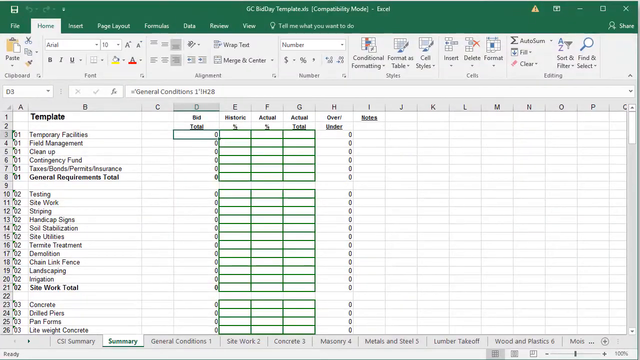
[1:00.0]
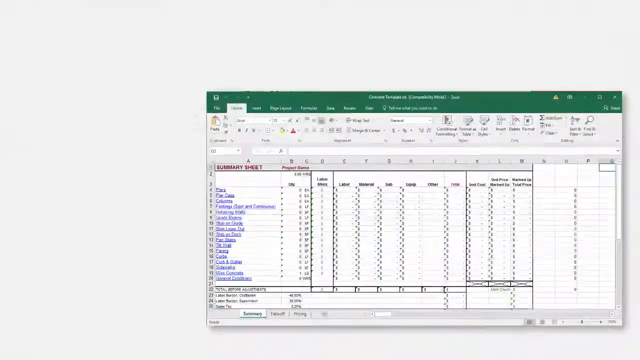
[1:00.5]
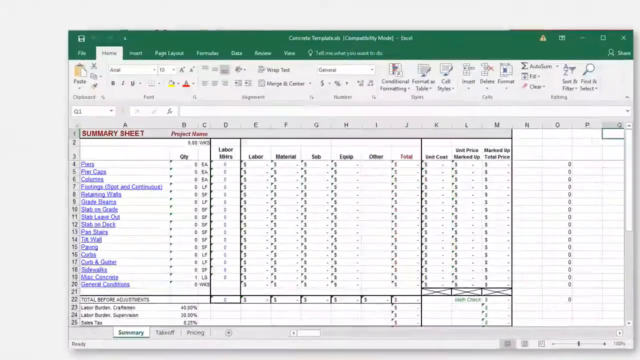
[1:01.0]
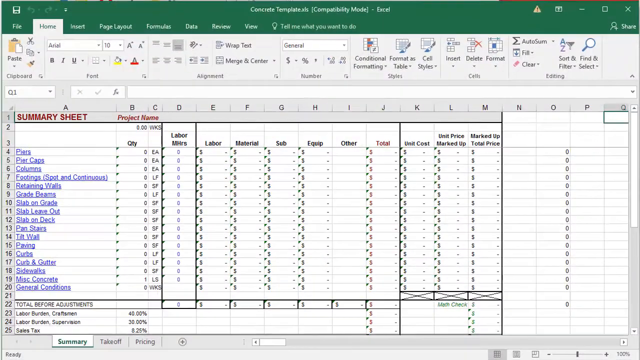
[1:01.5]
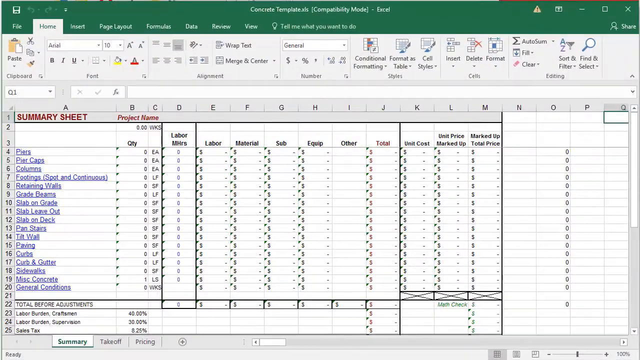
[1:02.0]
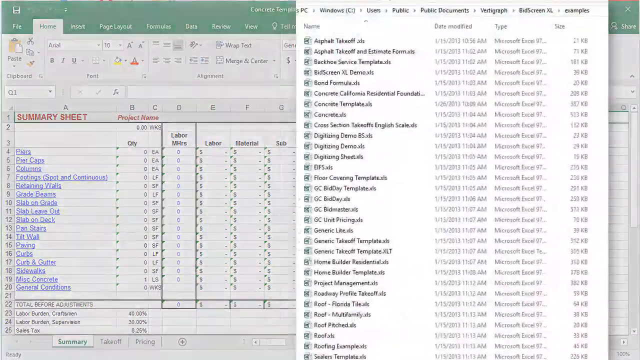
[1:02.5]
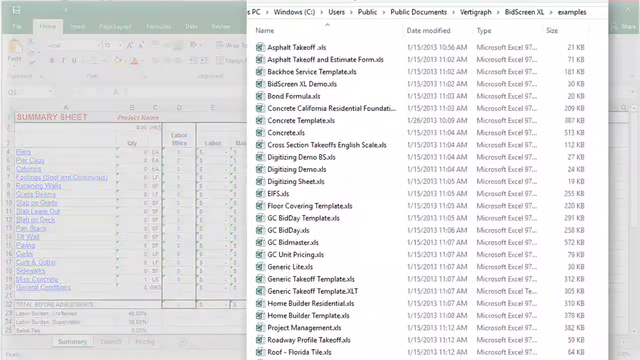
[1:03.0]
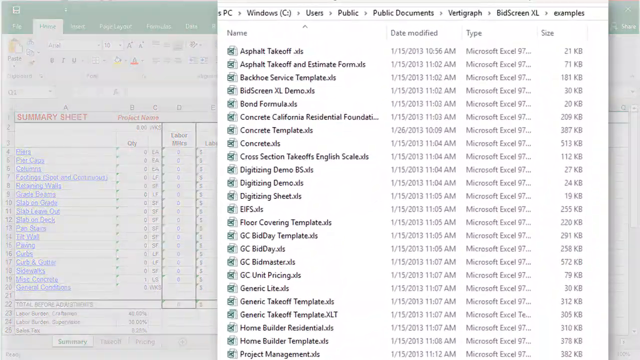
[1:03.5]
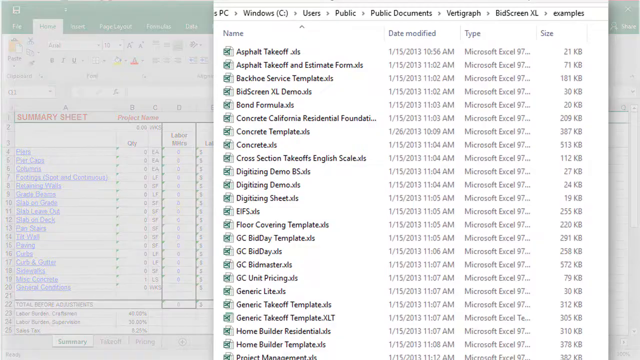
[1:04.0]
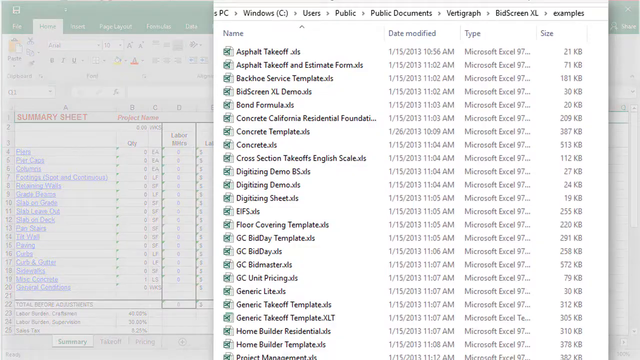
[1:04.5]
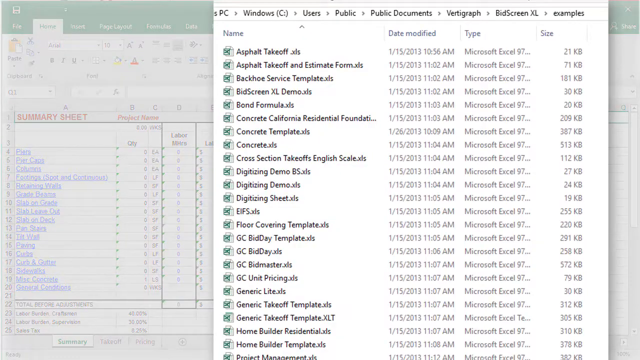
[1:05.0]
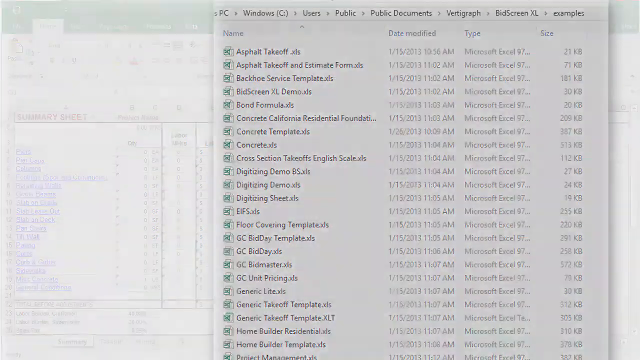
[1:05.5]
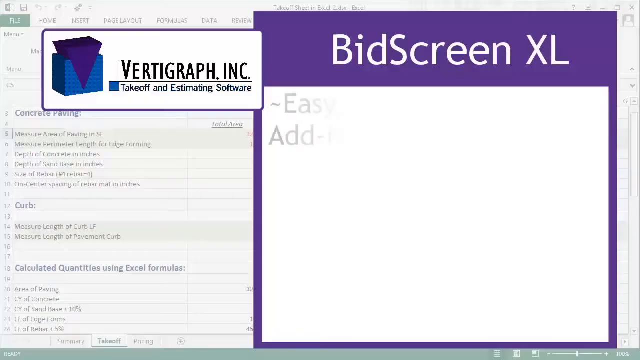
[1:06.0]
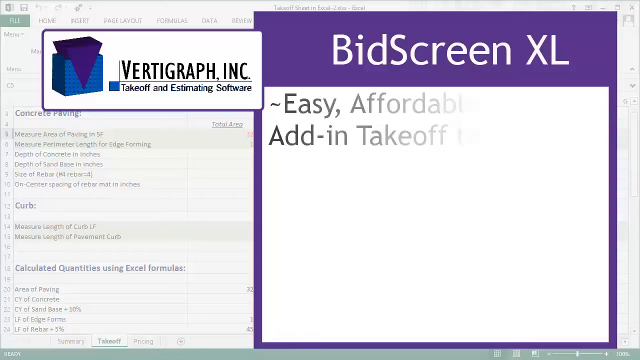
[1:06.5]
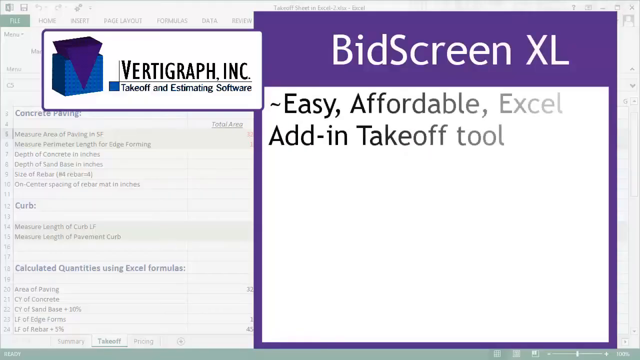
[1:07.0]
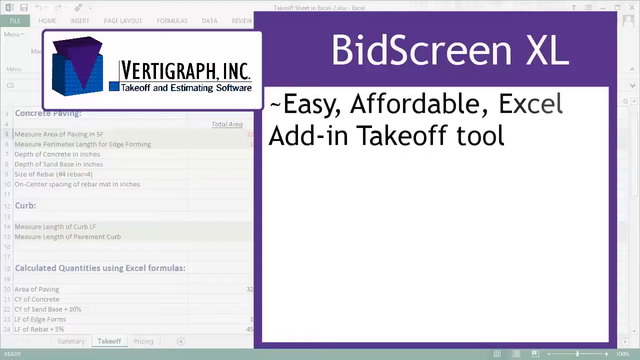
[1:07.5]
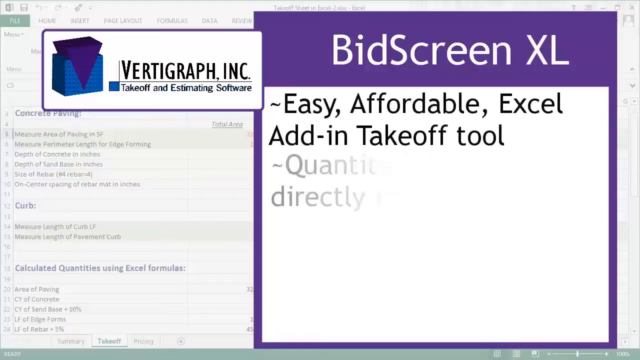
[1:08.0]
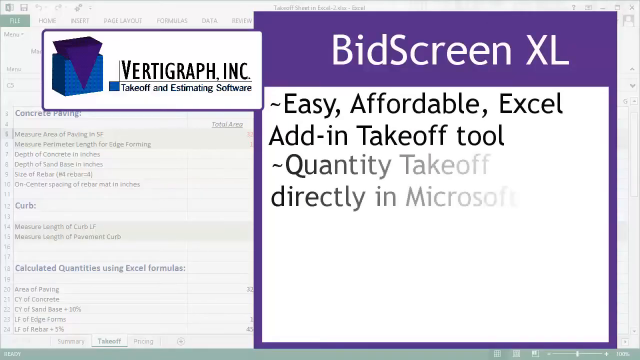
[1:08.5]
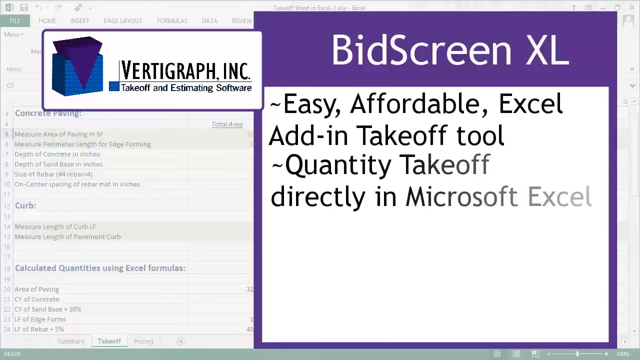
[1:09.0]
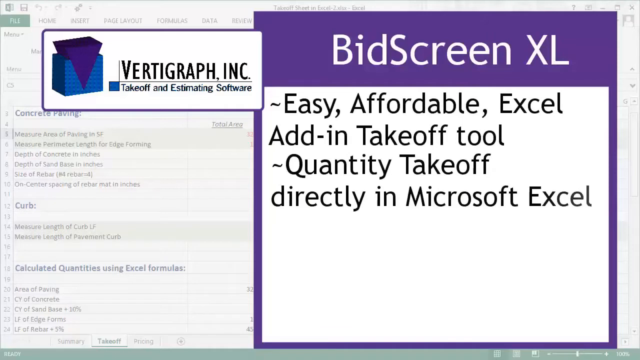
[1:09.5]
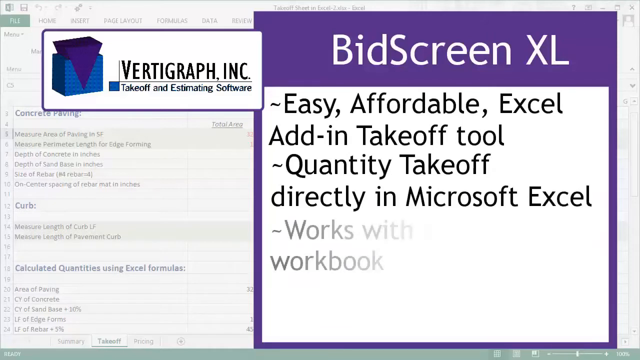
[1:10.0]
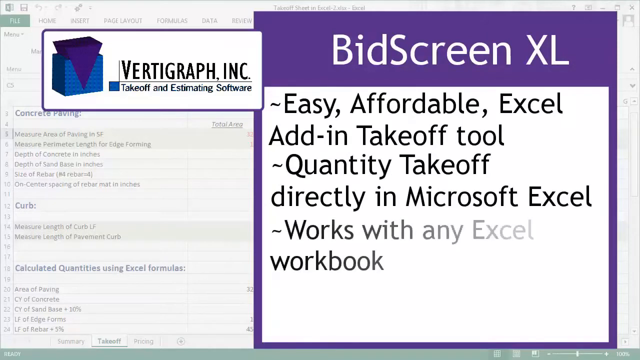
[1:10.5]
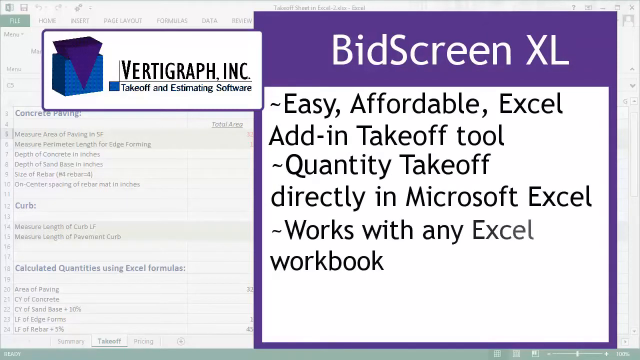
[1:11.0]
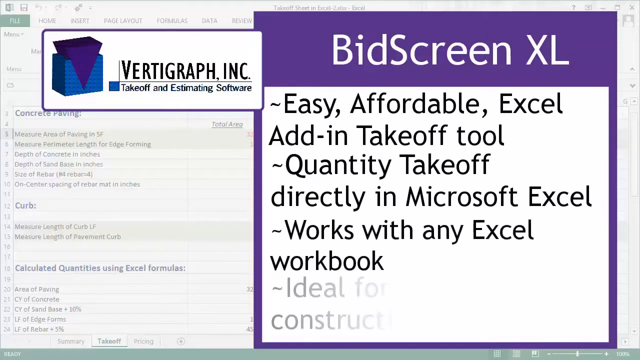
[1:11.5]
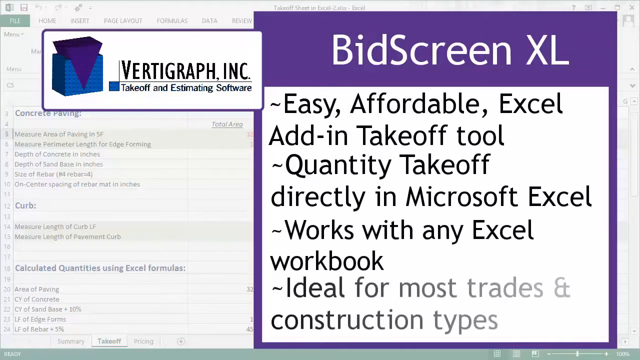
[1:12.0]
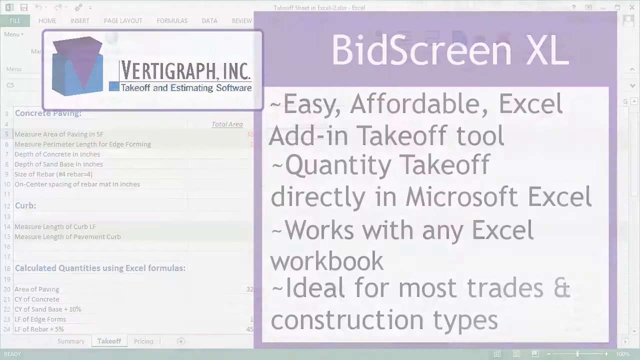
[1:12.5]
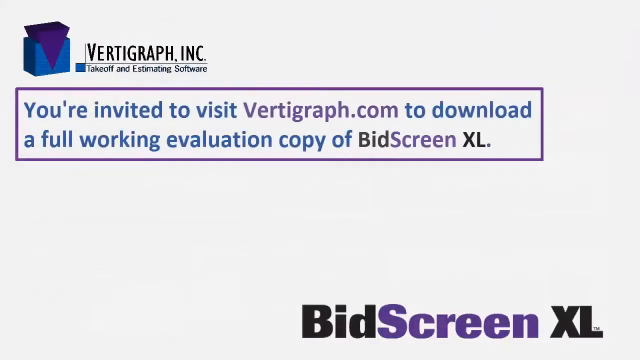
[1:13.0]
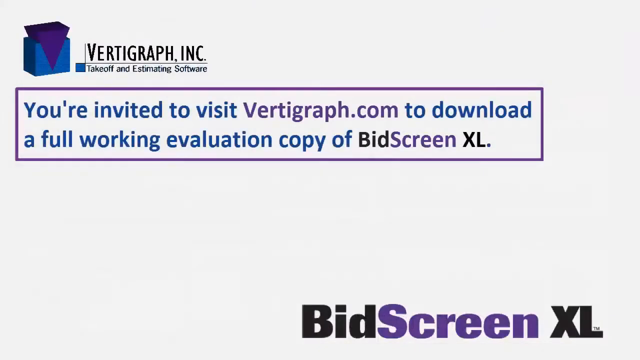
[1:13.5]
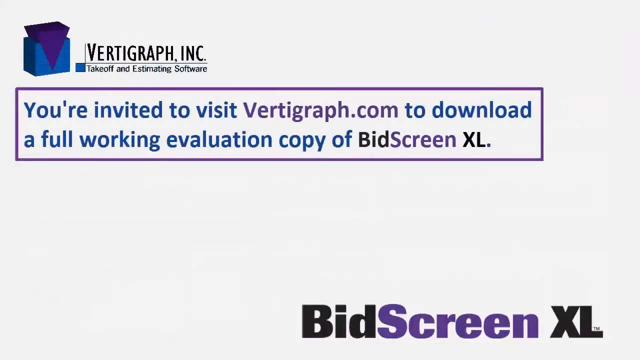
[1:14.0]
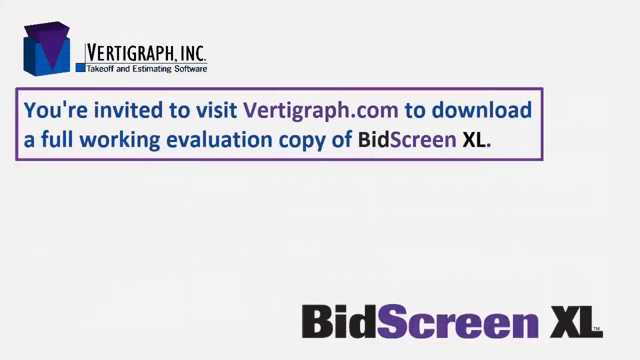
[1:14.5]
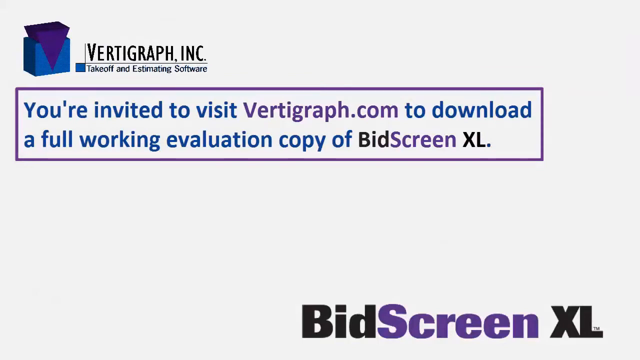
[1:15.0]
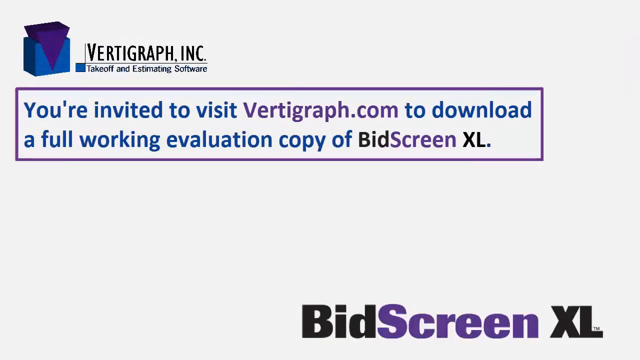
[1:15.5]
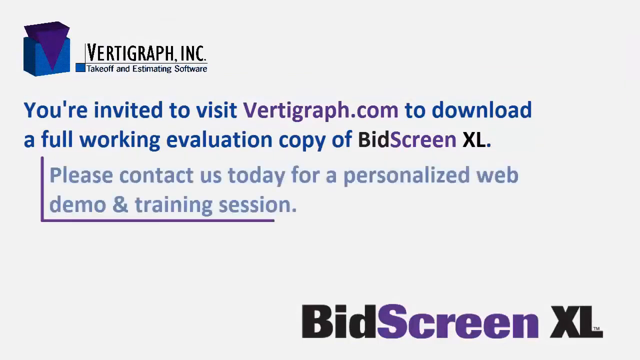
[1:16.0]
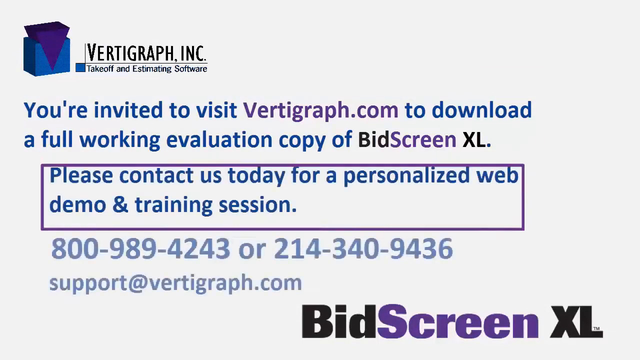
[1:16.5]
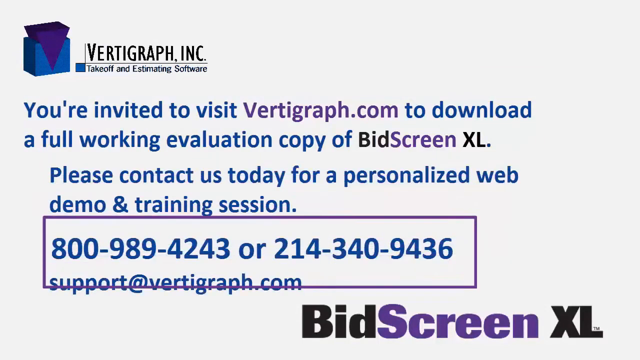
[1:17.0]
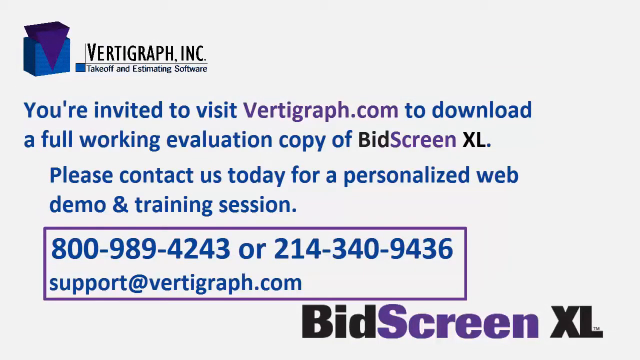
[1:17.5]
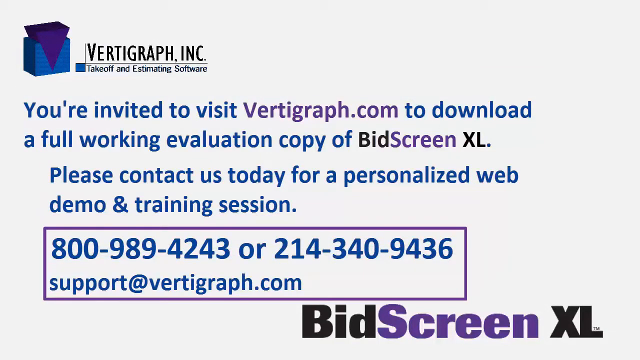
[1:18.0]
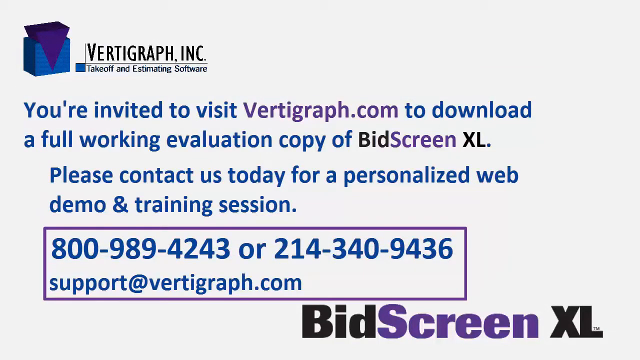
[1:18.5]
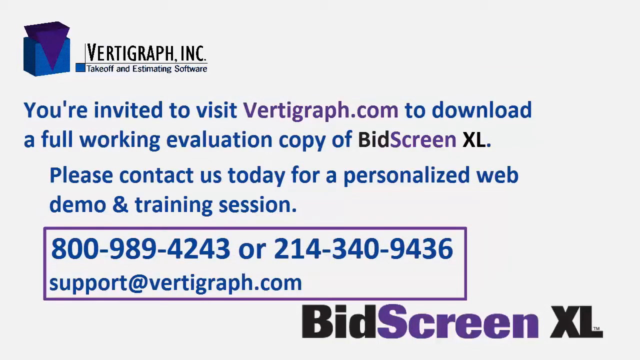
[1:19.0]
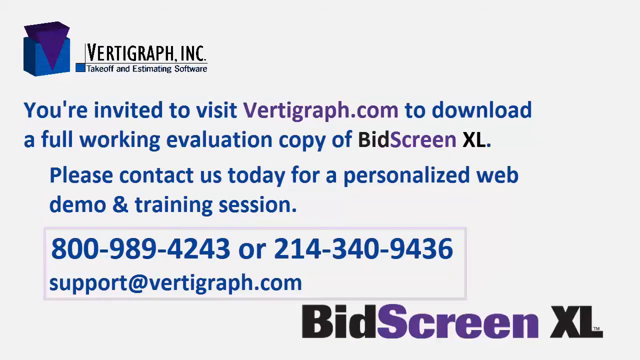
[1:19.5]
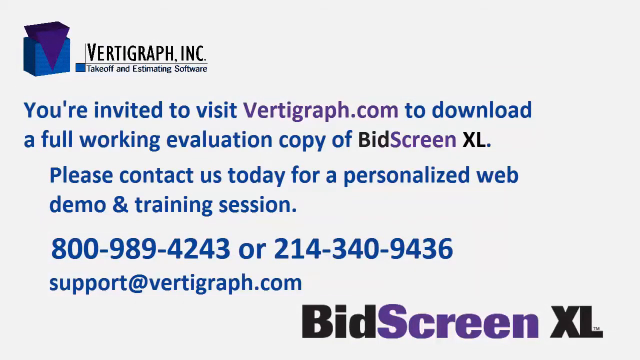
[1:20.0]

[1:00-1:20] A pull-out list shows the applications: alphabetic take-off, alphabetic take-off estimate form, brochure service template, B-screen SL demand, bond formula, and concrete. This is B-screen SL, presented as easy, affordable add-in take-off tools for quality take-off, directly in Microsoft Excel, working with any Excel workbook. The screen invites viewers to visit betagraph.com to download a full working evaluation copy of B-screen SL, and to contact them for a personalized web demo or training session.